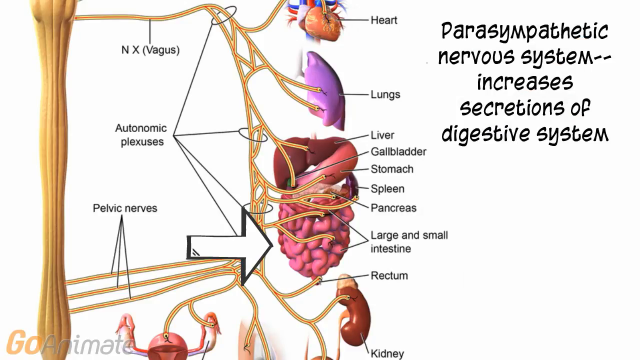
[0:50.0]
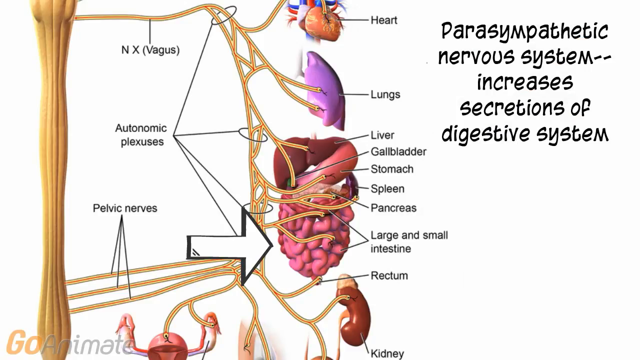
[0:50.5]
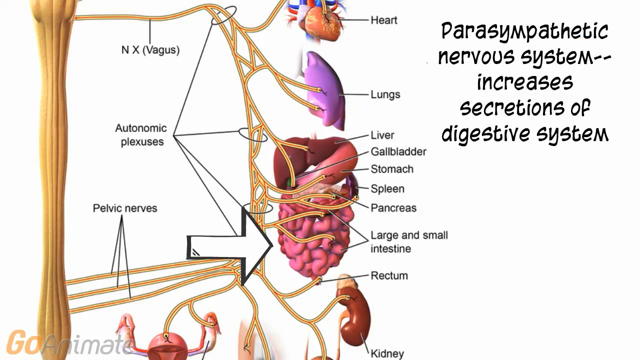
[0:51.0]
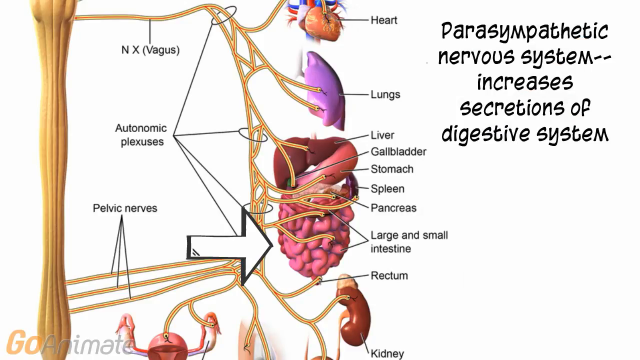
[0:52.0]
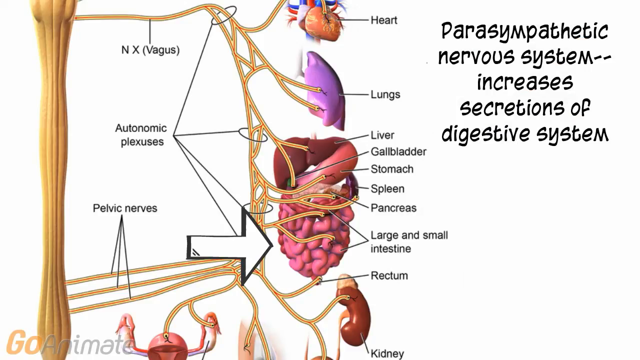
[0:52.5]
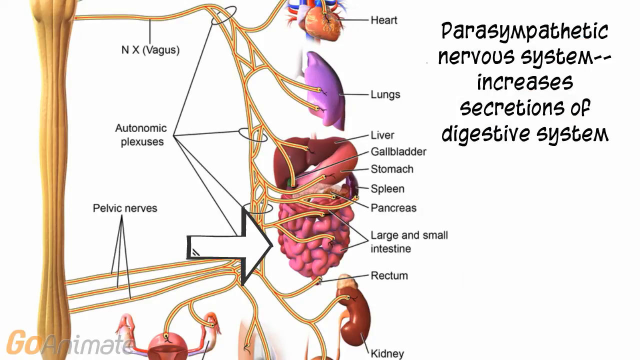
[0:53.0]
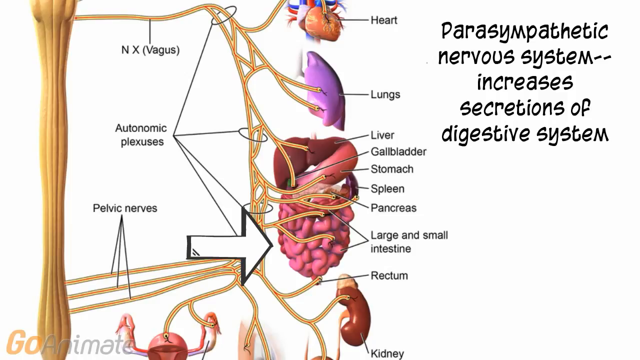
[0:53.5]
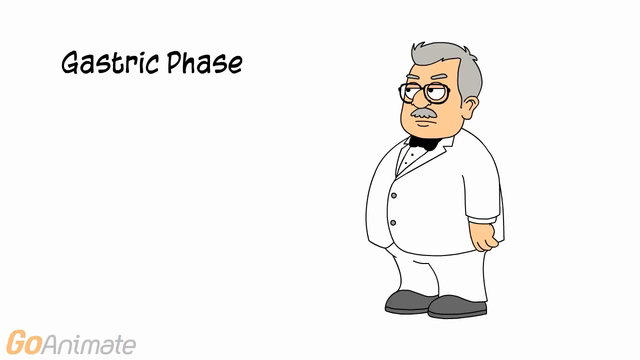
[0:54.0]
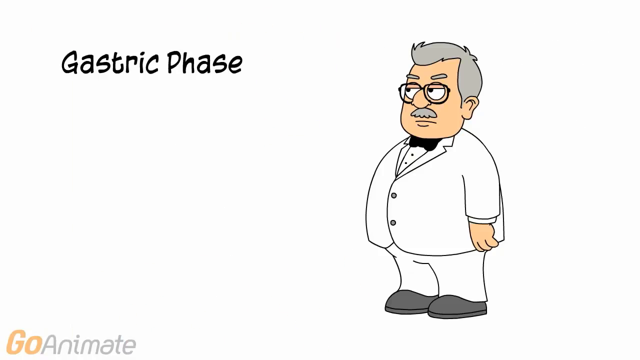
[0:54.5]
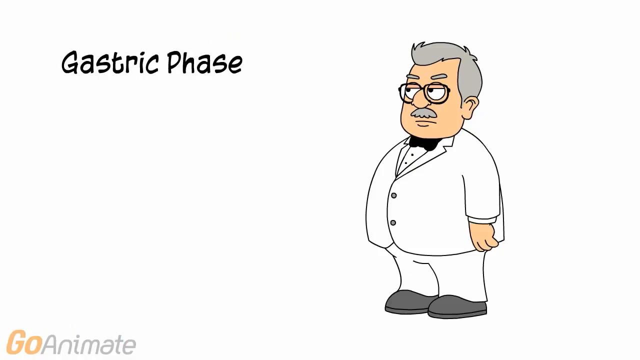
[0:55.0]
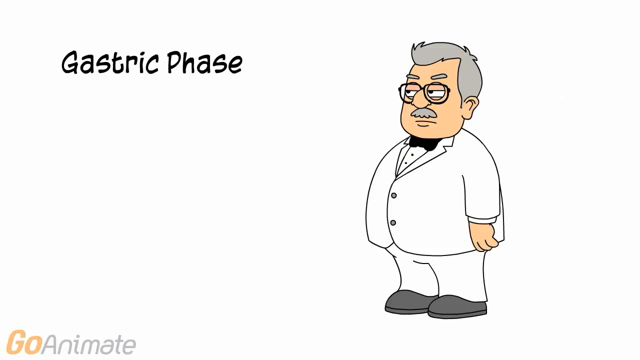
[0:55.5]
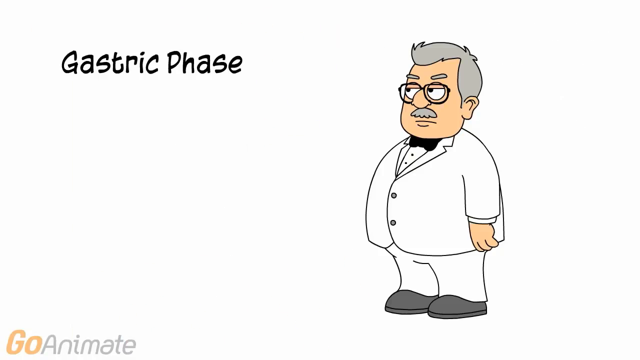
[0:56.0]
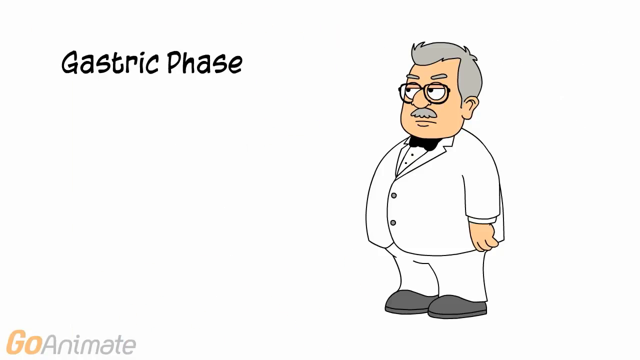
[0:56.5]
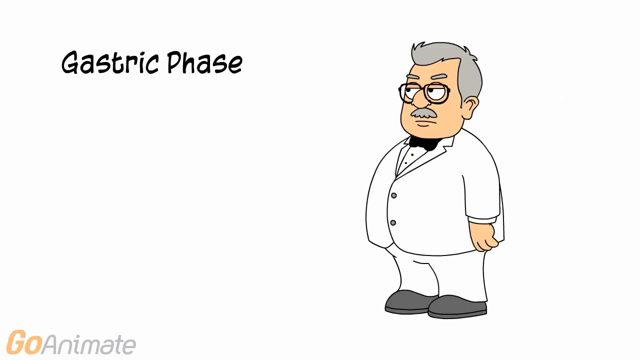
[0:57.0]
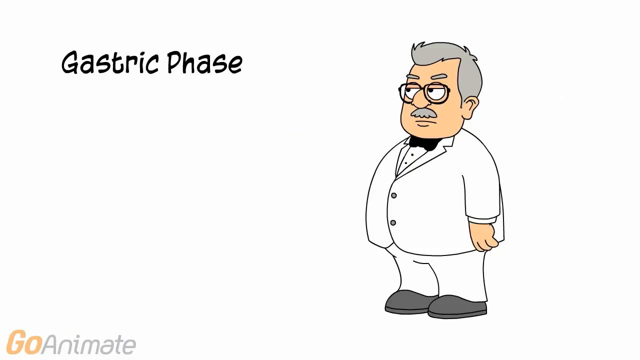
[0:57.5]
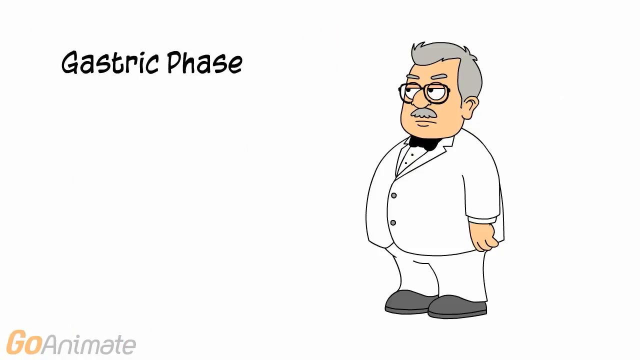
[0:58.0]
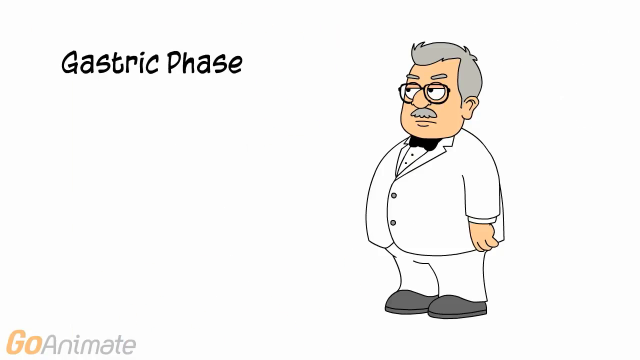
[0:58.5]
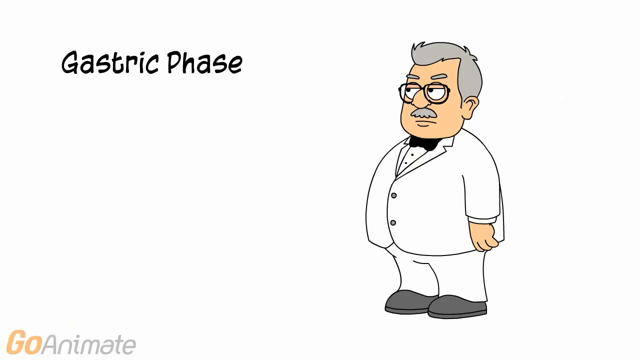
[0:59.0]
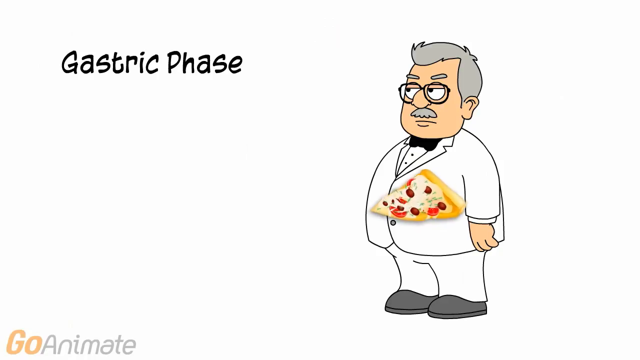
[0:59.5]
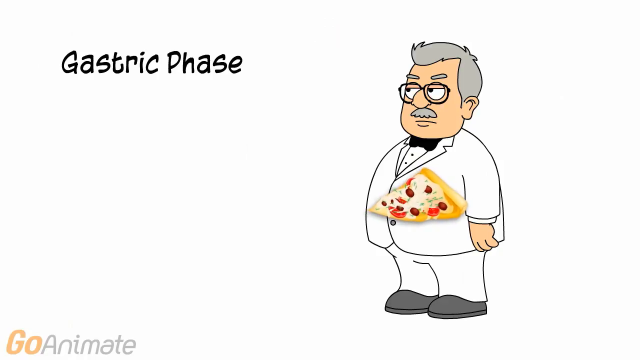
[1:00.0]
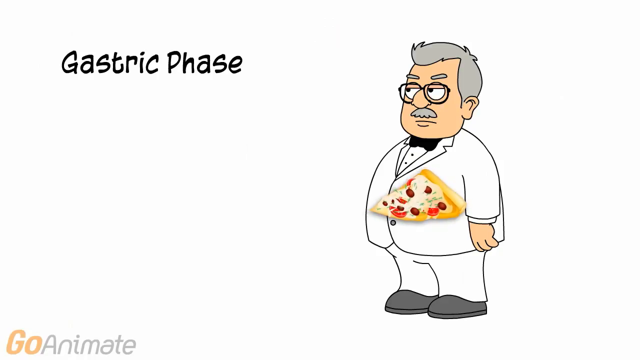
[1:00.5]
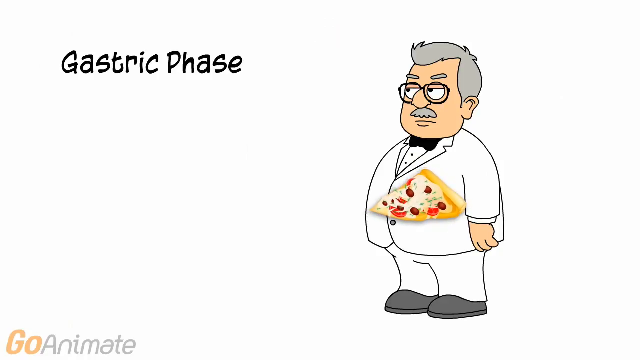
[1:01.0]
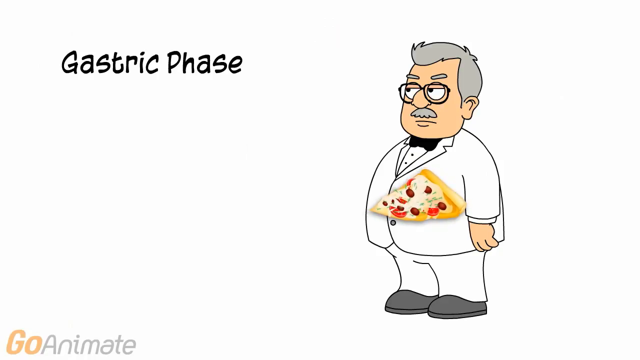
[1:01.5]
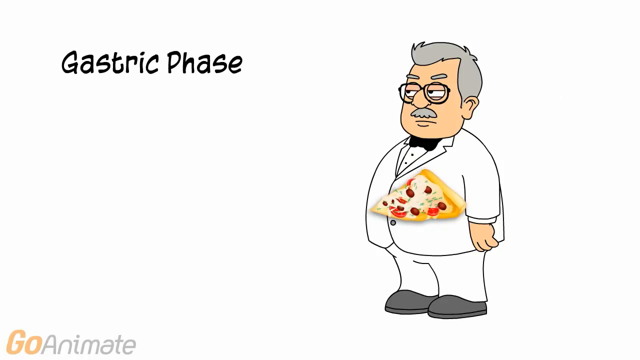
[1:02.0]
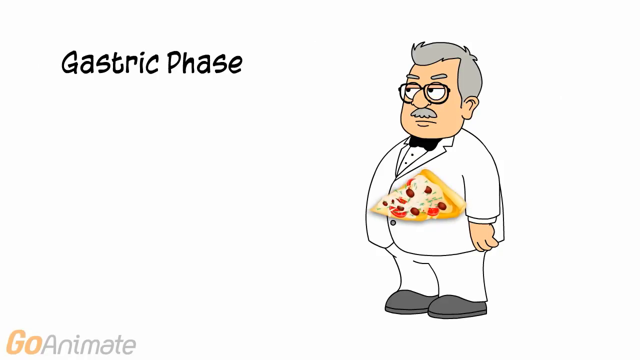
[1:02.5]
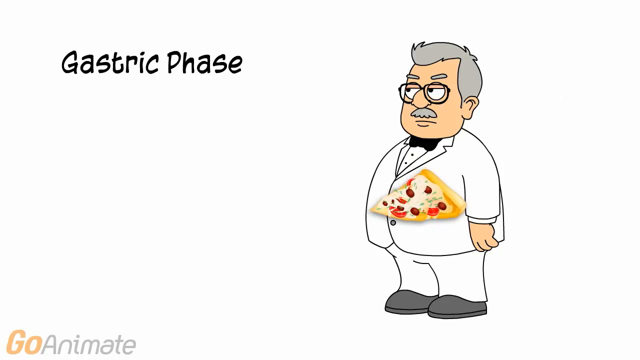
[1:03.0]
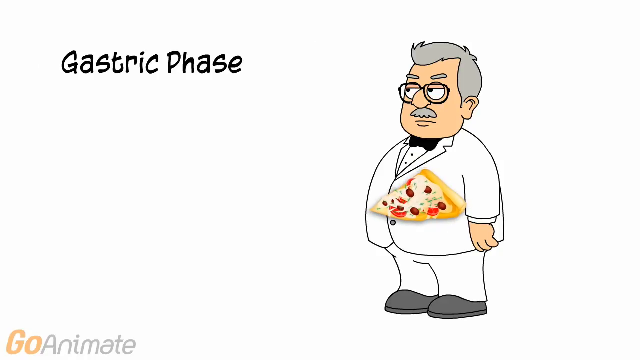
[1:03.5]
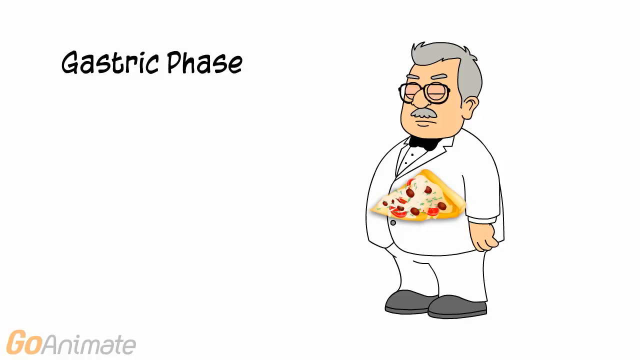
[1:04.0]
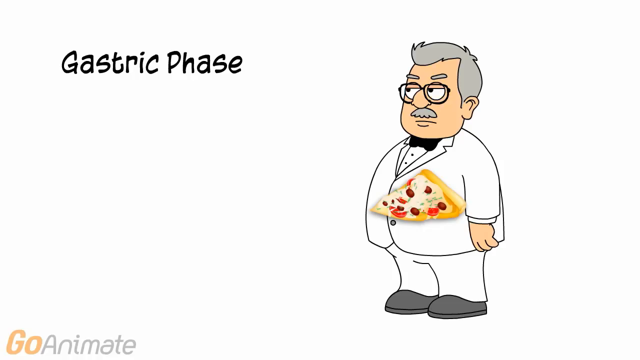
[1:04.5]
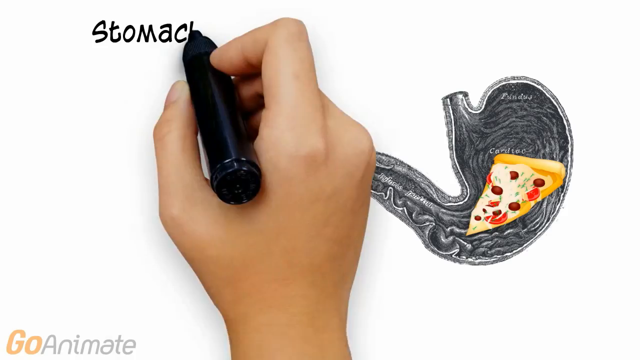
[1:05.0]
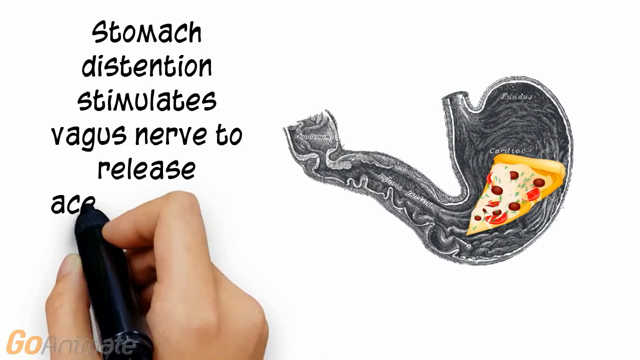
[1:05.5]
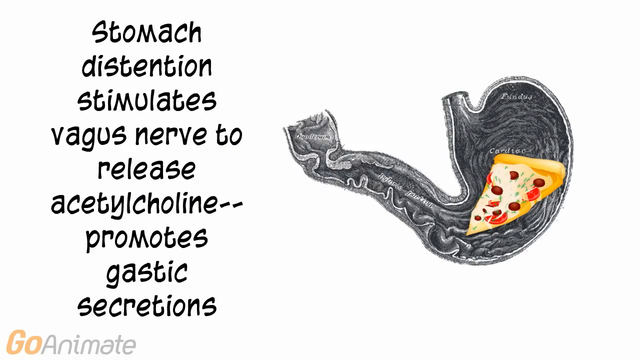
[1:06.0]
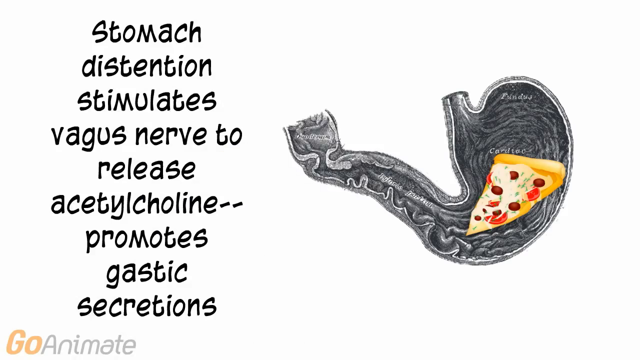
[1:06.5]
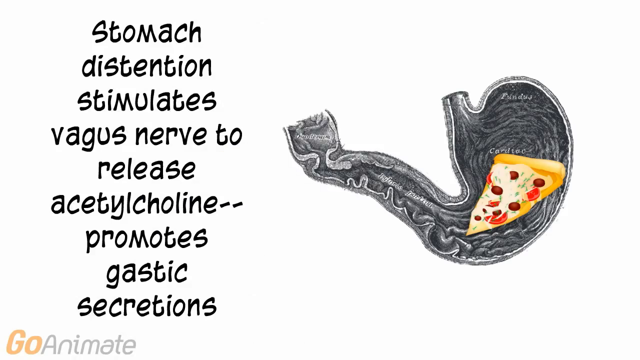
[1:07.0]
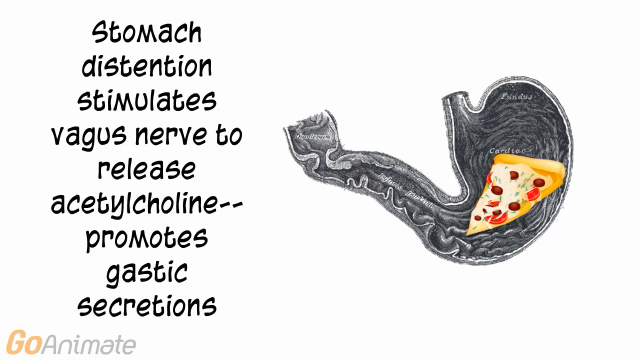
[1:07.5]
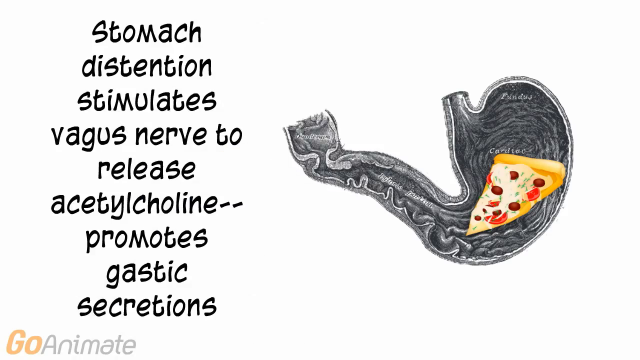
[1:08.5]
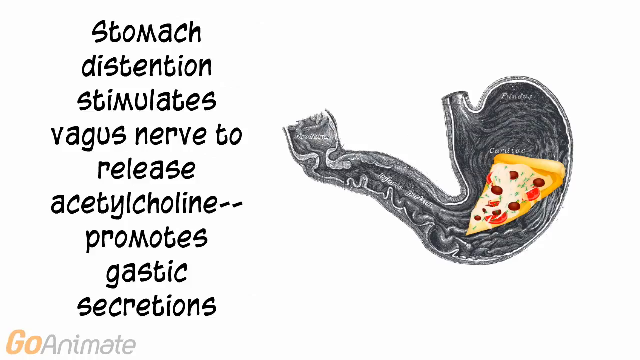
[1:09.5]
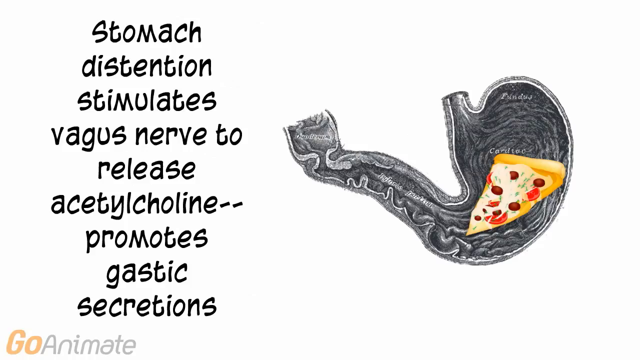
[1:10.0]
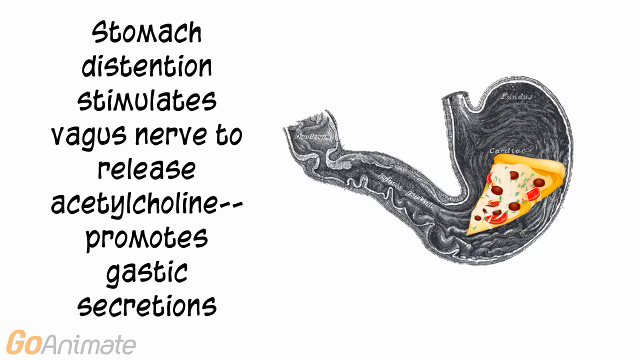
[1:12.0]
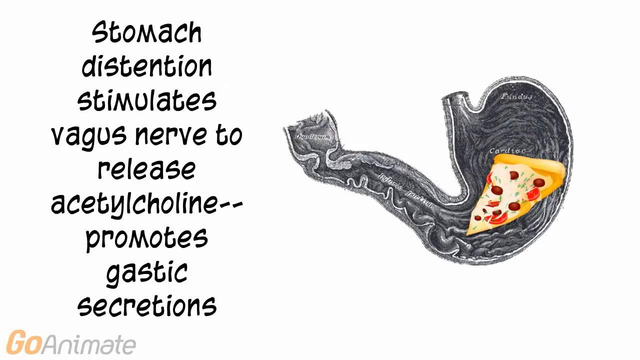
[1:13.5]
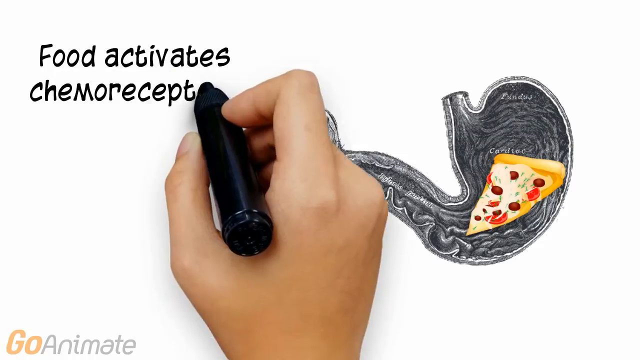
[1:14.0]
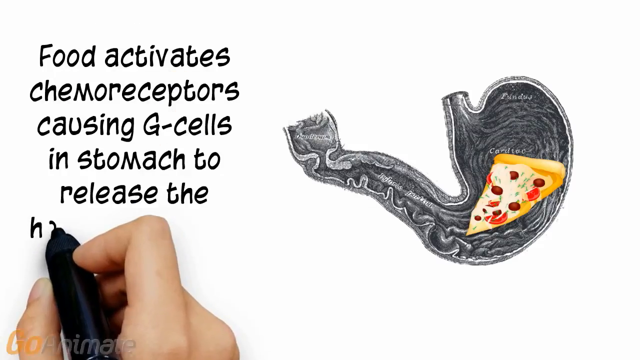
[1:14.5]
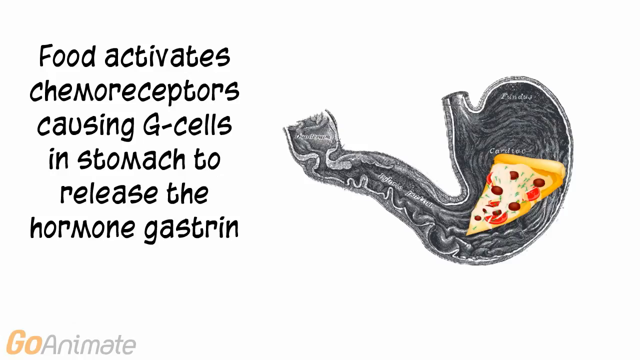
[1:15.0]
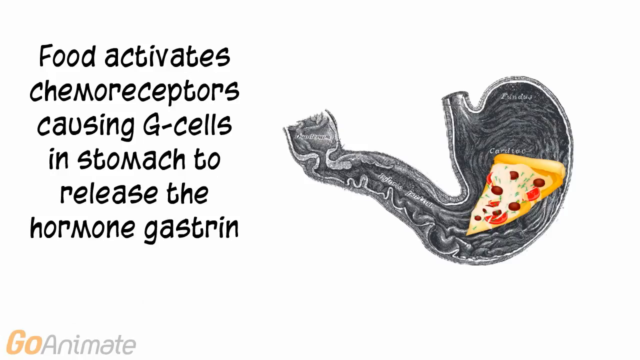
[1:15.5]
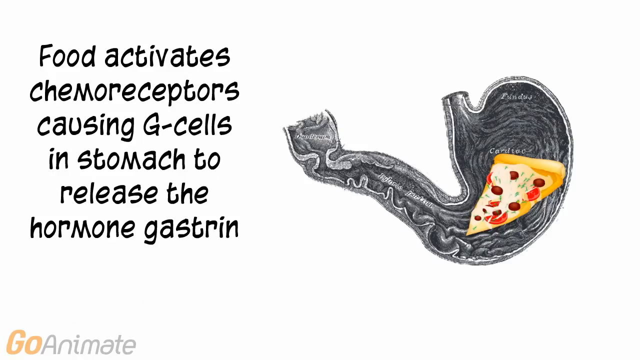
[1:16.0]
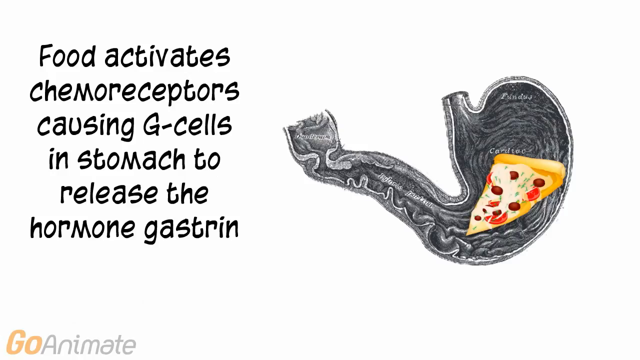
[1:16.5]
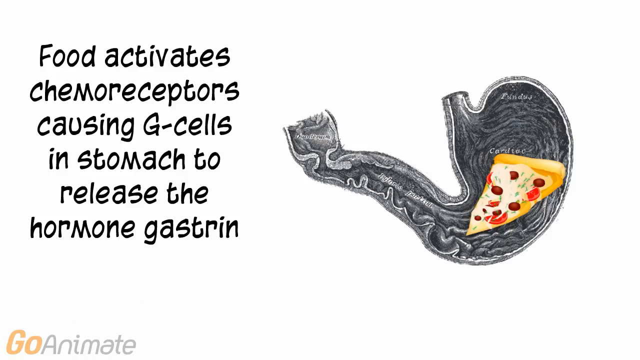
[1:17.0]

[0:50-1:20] The same detailed, labeled image of the body is shown, including the lungs, the large and small intestines and the stomach area. It then transitions to a new animated screen showing a gentleman in a white suit with a big belly, with "gastric phase" written. A 2D piece of pizza is animated on top of the man's belly. The scene transitions to a new screen showing the stomach with that animated piece of pizza inside, with bold lettering reading "Stomach distension stimulates vagus nerve to release acetylcholine, promotes gastric secretions," followed by "food activates chemoreceptors causing G-cells in the stomach to release." The picture of the stomach with the animated pizza inside remains on screen.